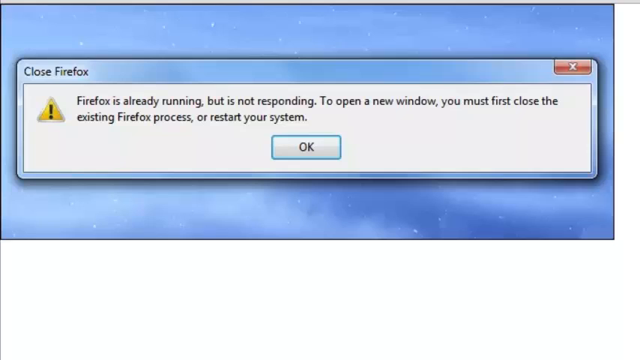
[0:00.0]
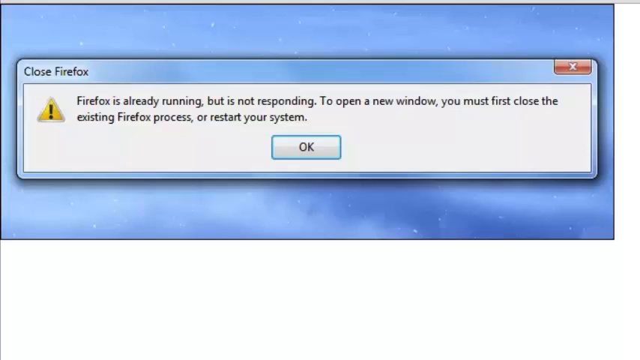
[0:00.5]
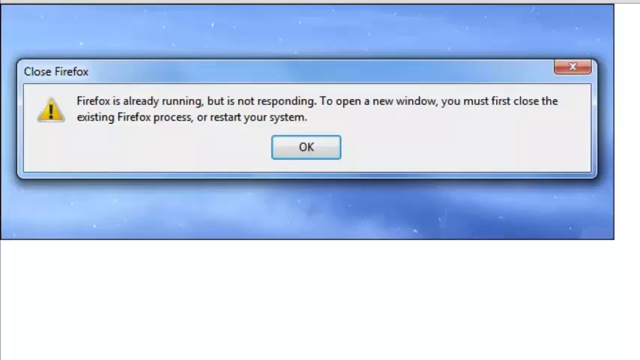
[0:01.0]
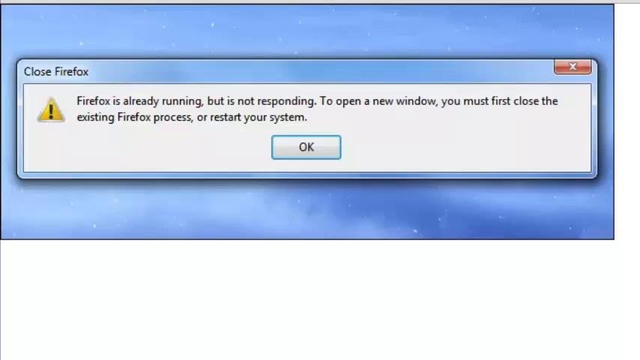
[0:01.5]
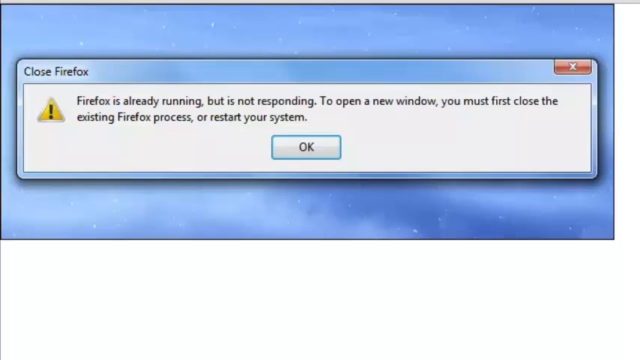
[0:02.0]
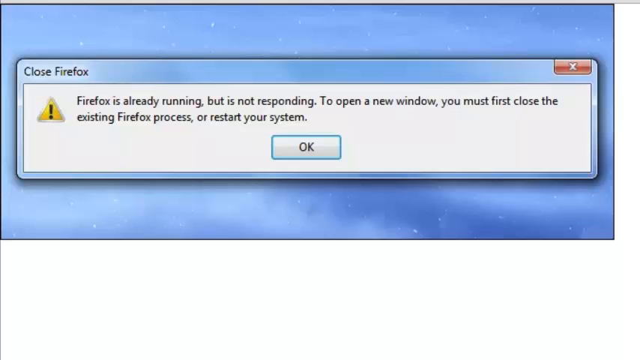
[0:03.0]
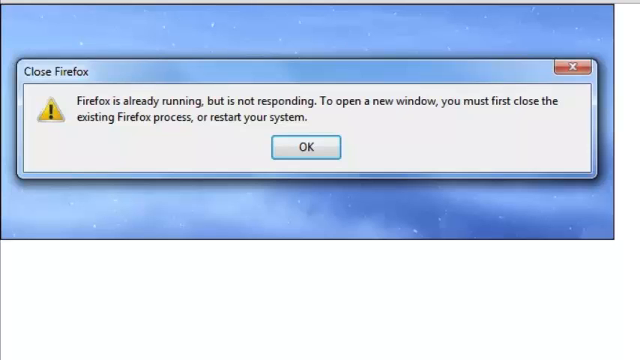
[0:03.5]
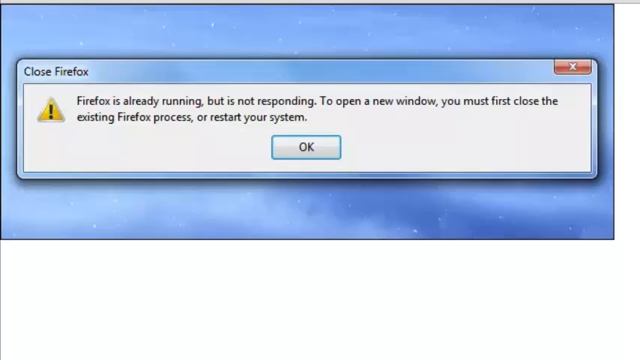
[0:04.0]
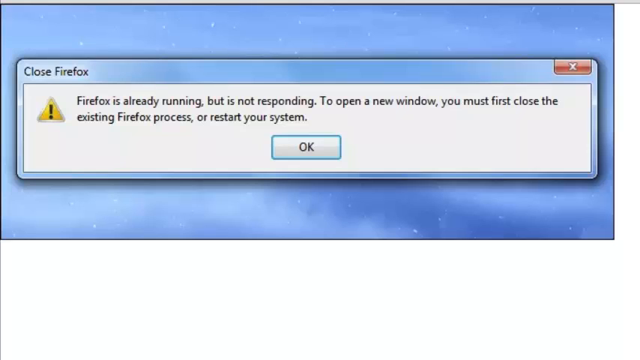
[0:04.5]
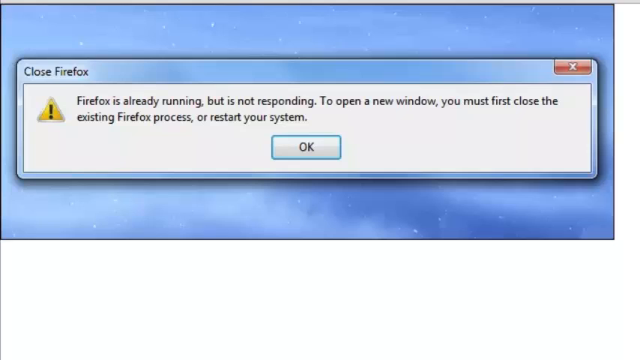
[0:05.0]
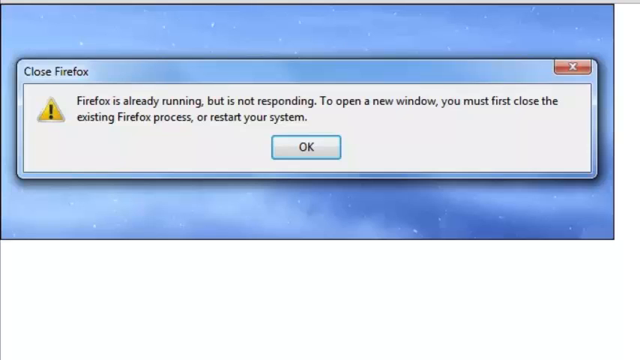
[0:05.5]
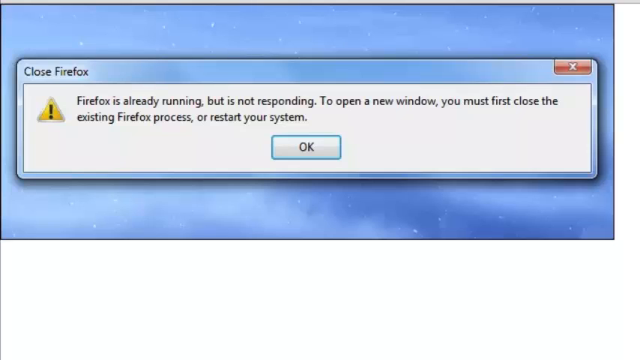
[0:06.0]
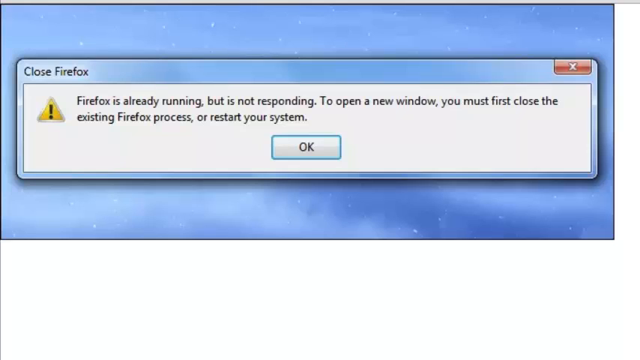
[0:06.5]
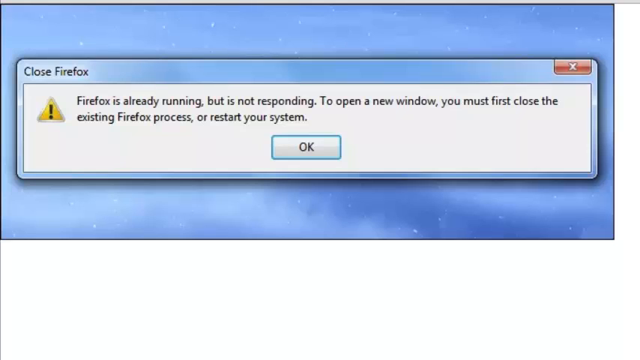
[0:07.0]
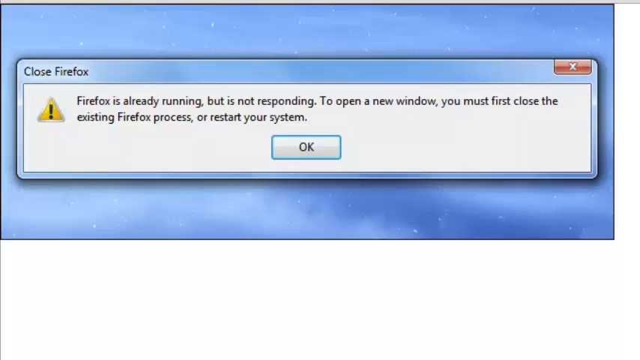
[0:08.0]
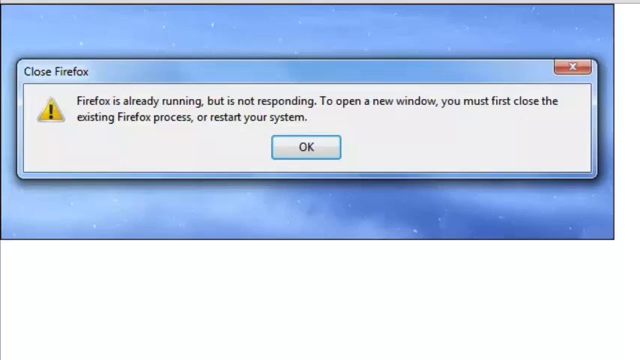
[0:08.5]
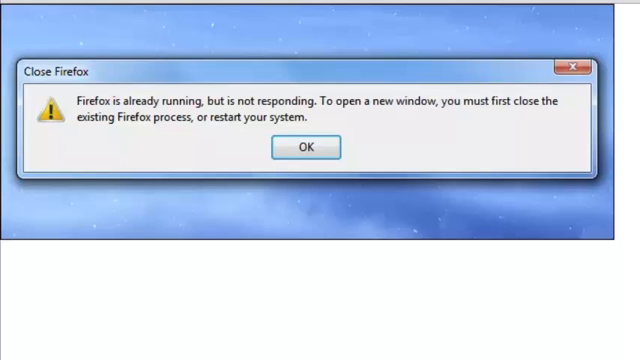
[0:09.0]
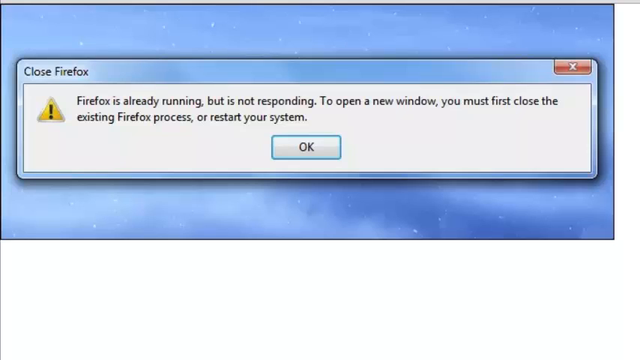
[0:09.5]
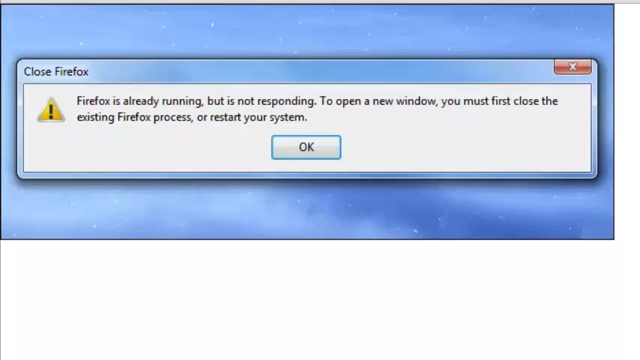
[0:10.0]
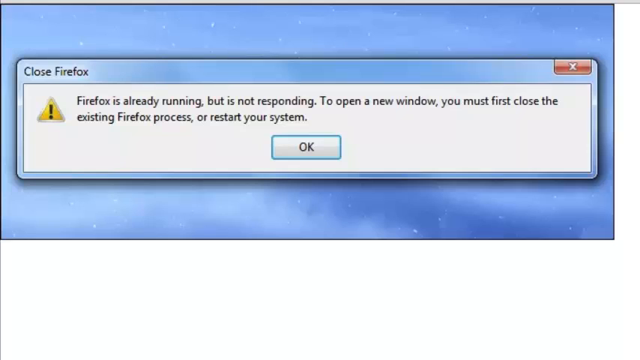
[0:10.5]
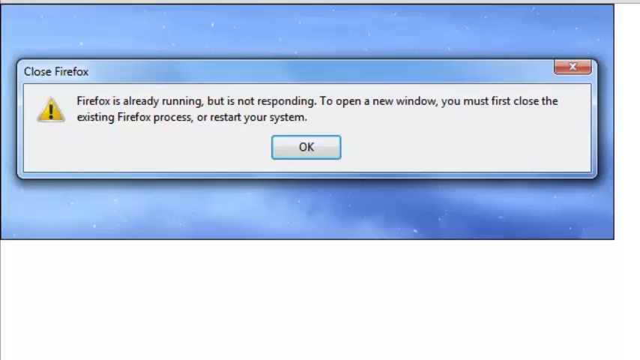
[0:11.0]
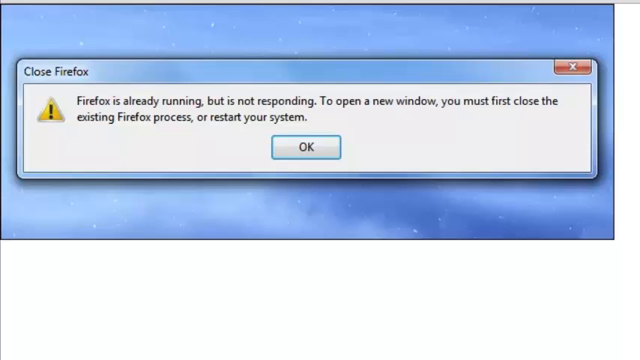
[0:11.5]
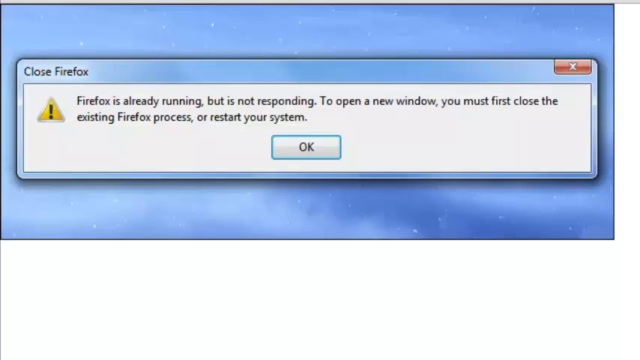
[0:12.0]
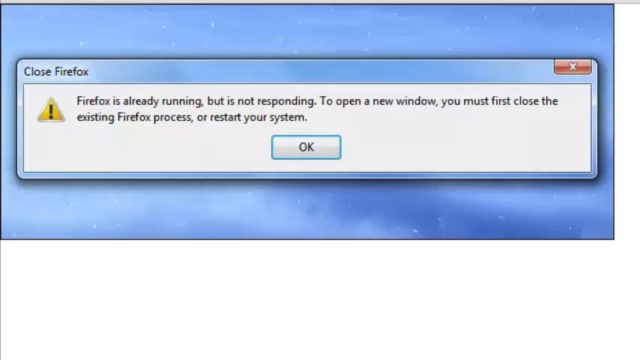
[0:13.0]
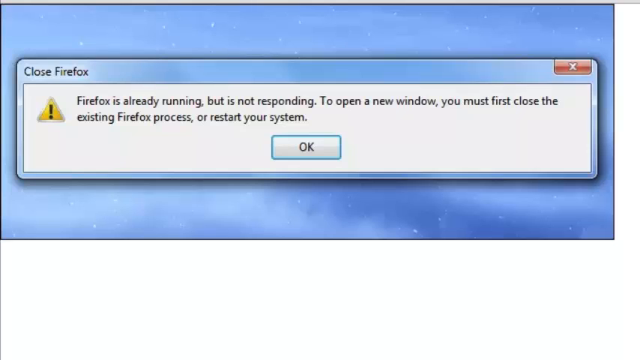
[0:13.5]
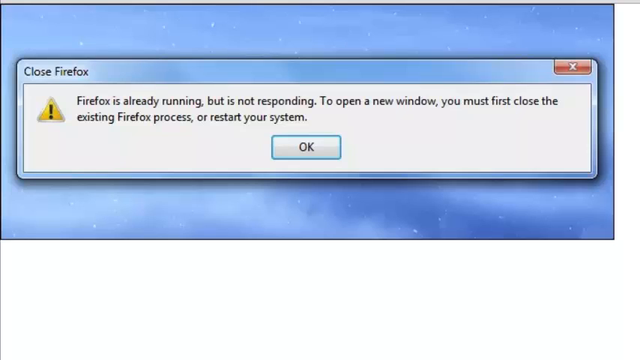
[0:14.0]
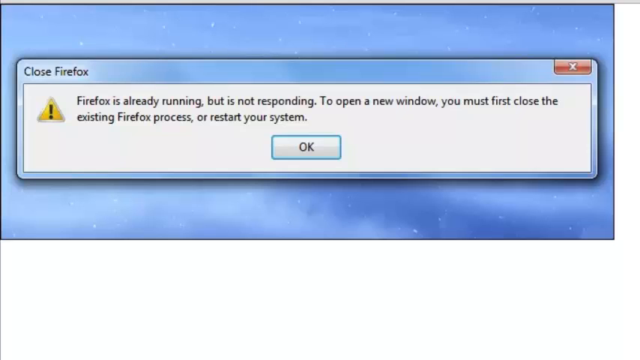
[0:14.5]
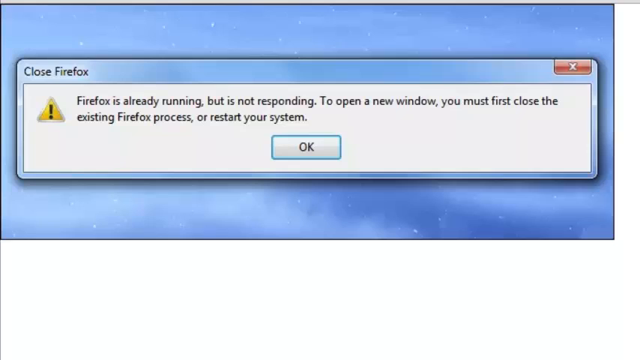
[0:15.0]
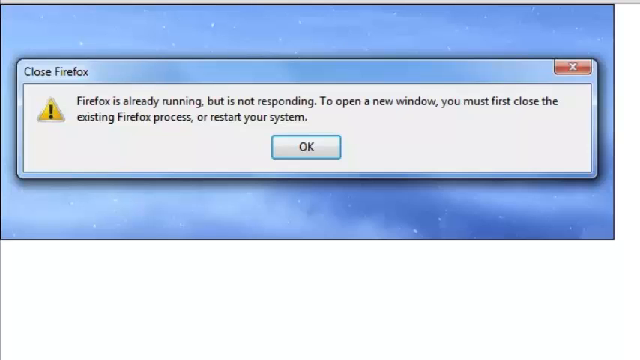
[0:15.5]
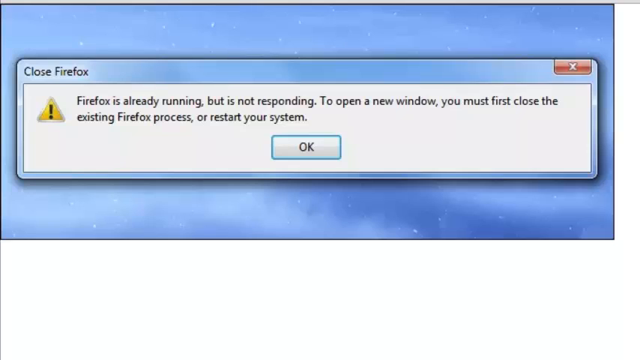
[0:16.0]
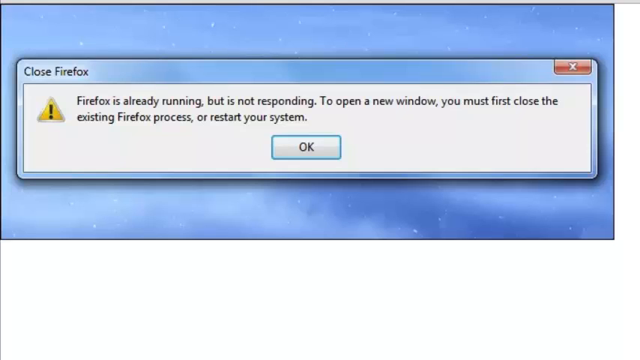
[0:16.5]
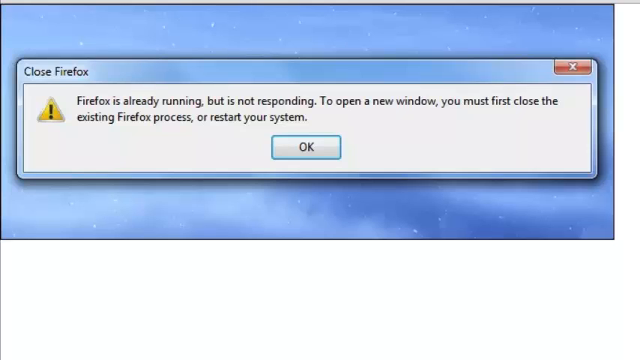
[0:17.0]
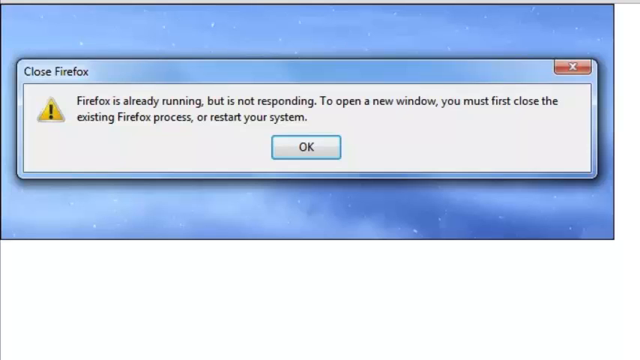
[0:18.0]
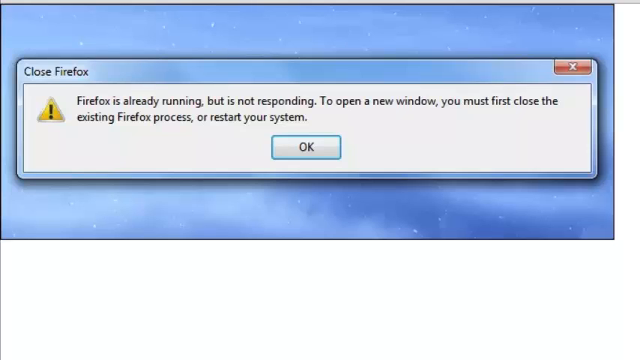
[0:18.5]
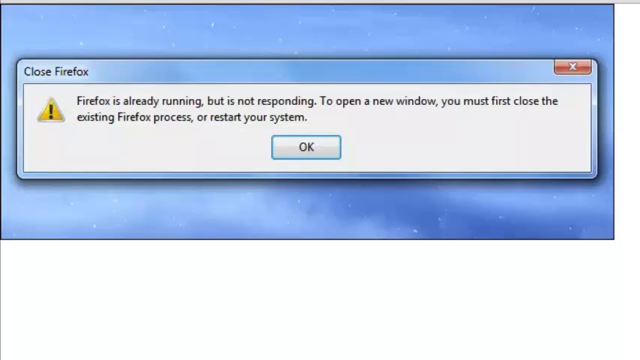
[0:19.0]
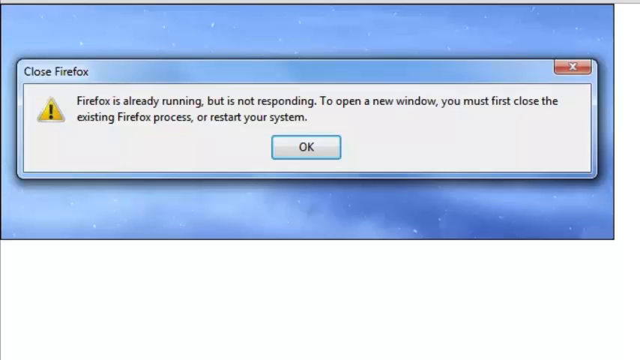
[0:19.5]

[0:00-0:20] A Firefox pop-up appears over a blue, ethereal-like patterned background. The pop-up shows a warning: "Firefox is already running but is not responding. To open a new window you must first close the existing Firefox process or restart your system", with an OK button. The bottom third of the screen and a small right margin are plain white, while the rest of the screen holds the blue, ethereal-like pattern with the pop-up over it. The pop-up is relatively old in style. It has a single red X at the top, "closed Firefox" in its top left, and a triangular warning icon on the left, with the text in the middle on a white background. The screen stays on this view the whole time.